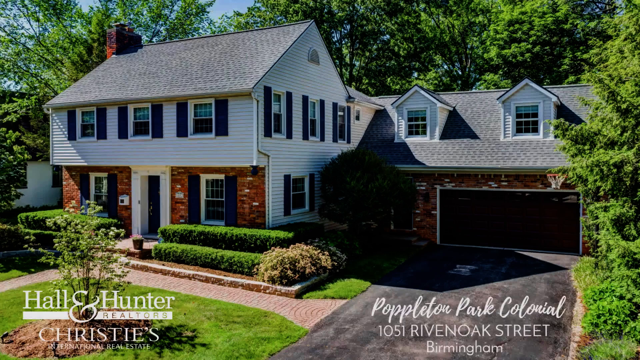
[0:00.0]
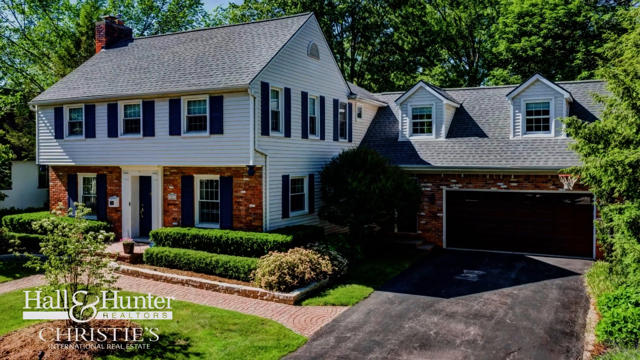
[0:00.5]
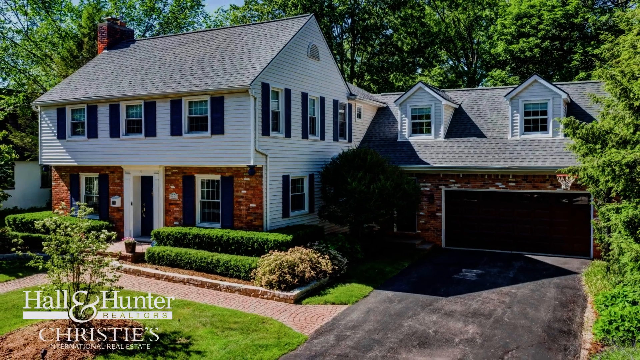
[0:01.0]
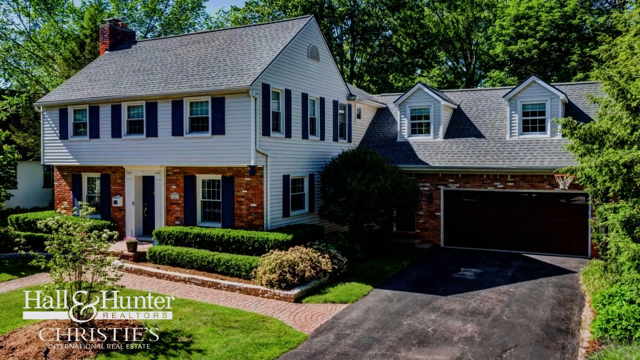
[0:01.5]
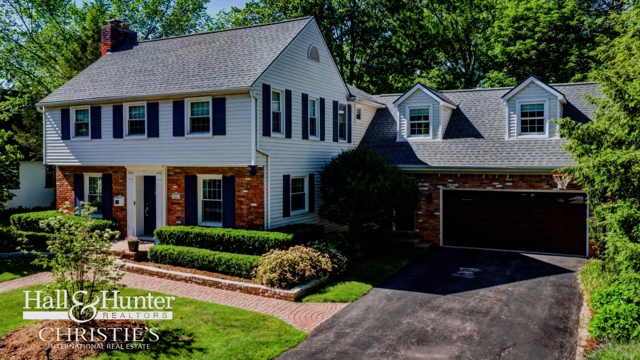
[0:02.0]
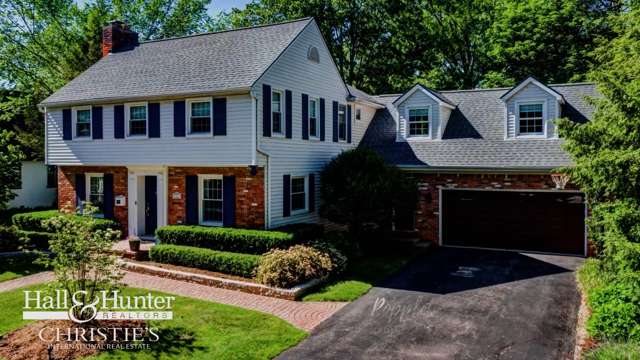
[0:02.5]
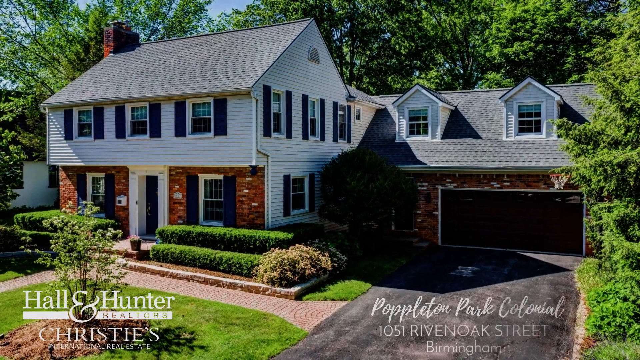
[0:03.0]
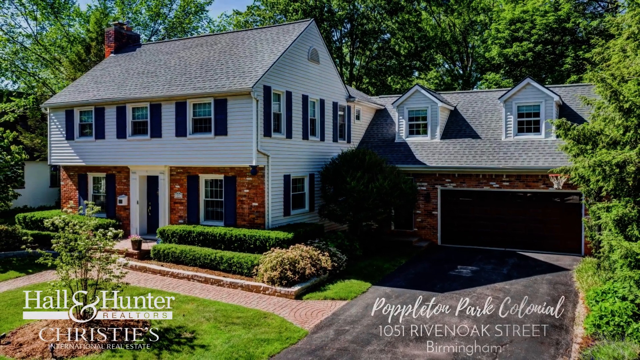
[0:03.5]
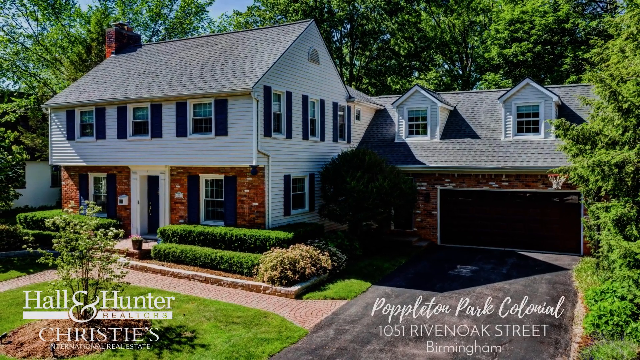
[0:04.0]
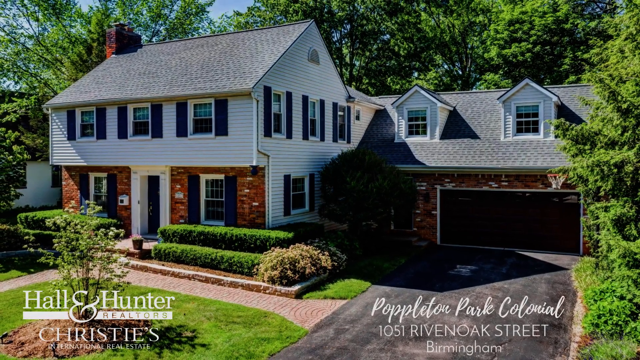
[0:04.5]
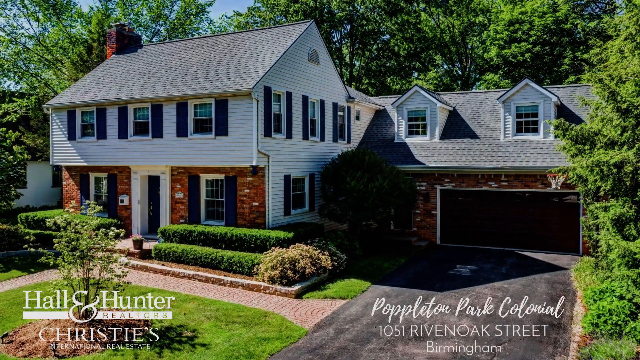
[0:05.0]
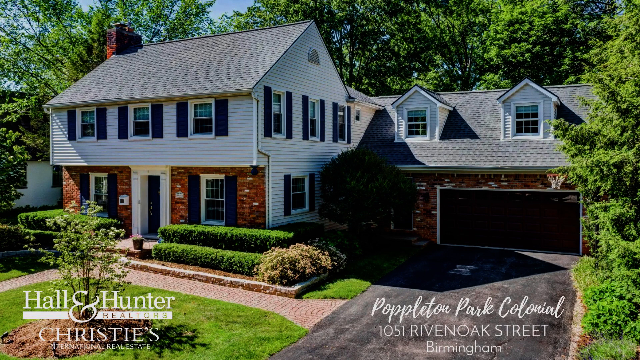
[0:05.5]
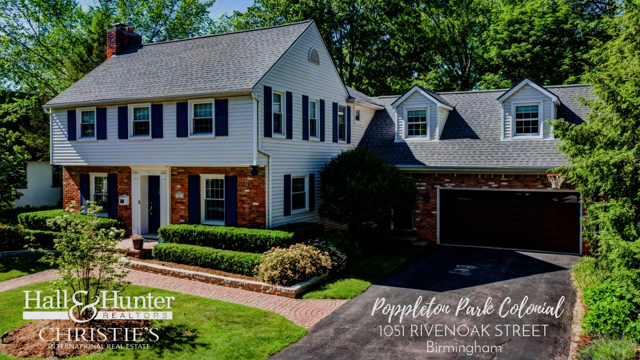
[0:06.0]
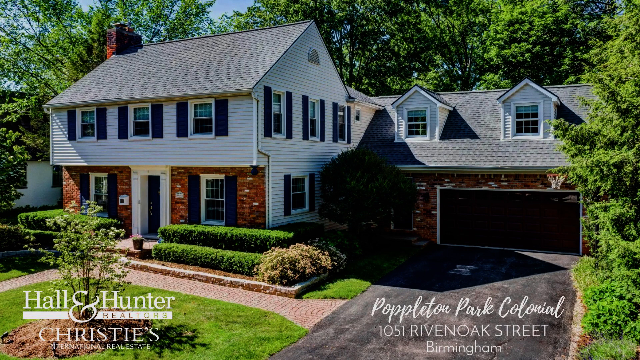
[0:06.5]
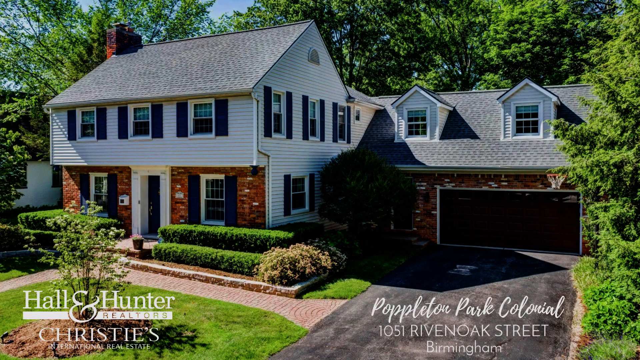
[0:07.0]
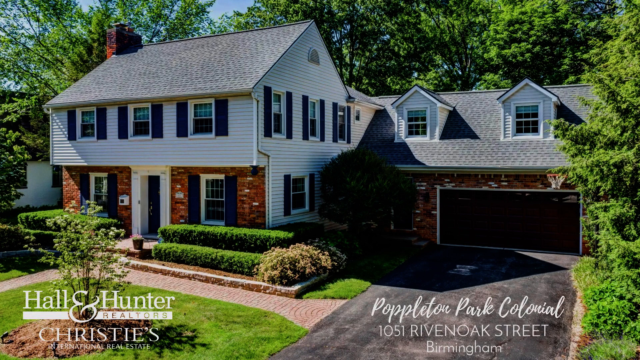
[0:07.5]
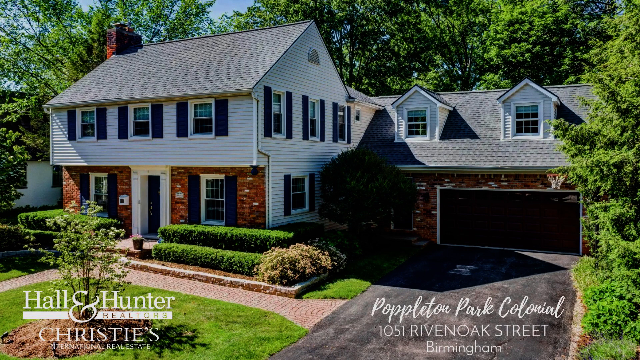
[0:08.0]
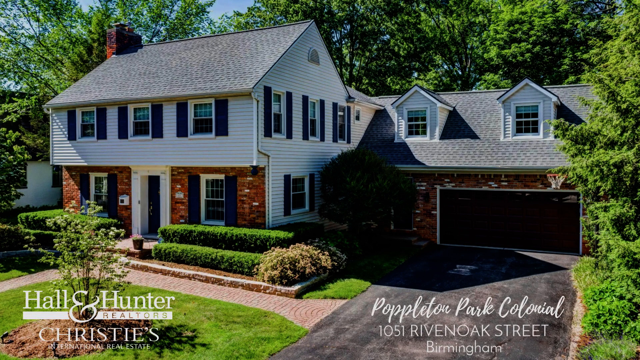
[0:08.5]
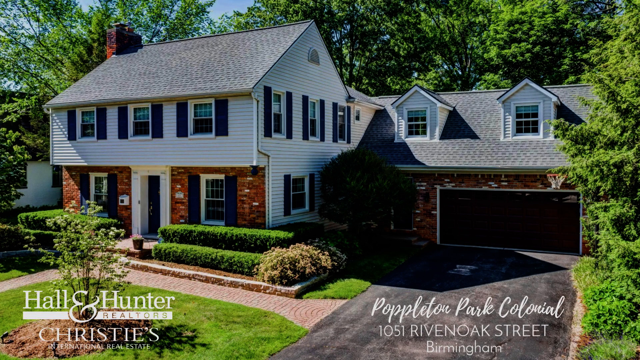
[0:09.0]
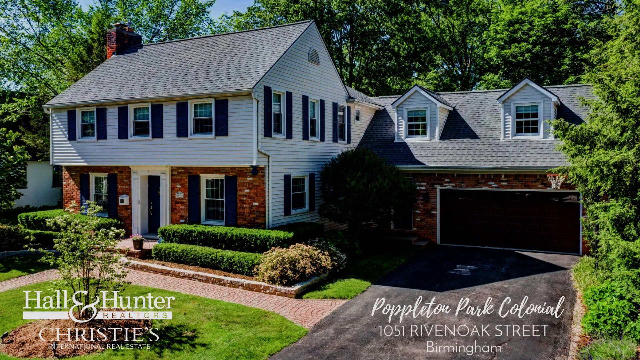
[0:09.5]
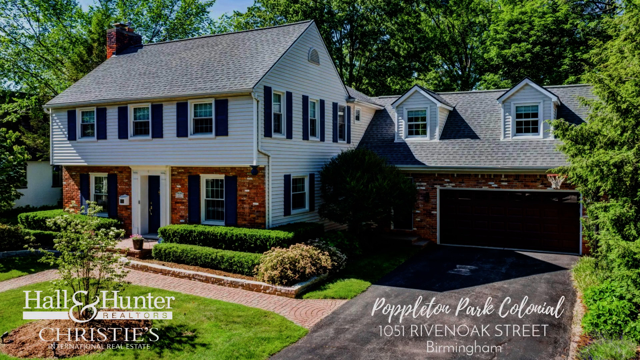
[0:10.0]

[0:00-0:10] A modern-looking house at 1051 Rivendell Street in Poppleton Park, Colonial, is shown, by Hall and Hunter Realtors. The house has a lot of brick, and a bunch of trees surround the back, covering pretty much the entire surrounding of the house. The camera zooms out to show the entire house; the setting does not change, and only the front of the house is shown. There is one black garage, and the house appears to have two connected to it, while the garage seems to have its own little portion, so the house looks fairly big.